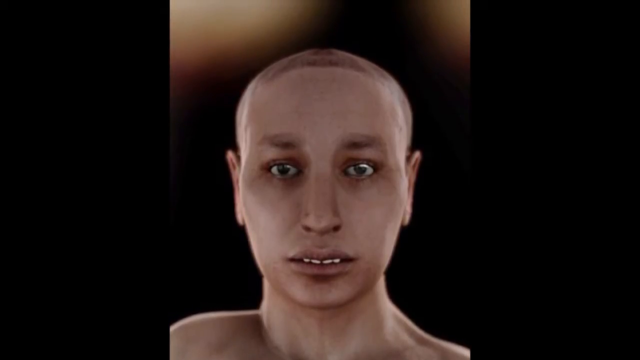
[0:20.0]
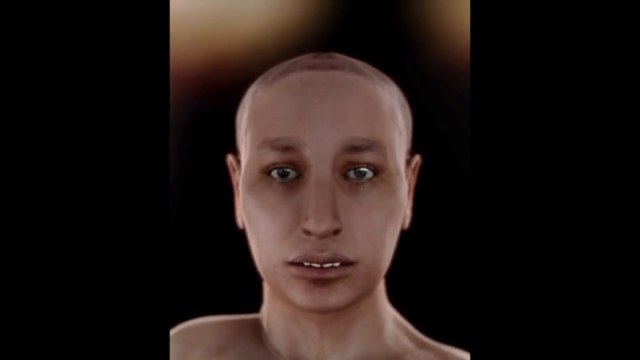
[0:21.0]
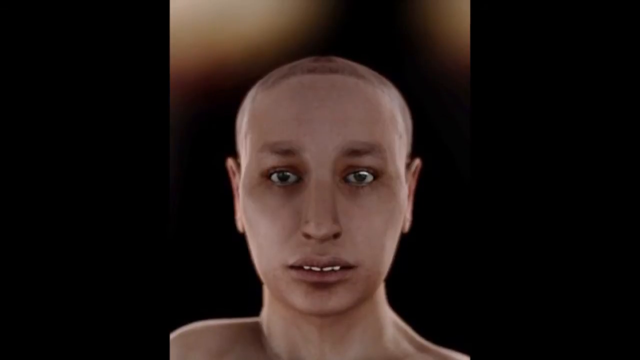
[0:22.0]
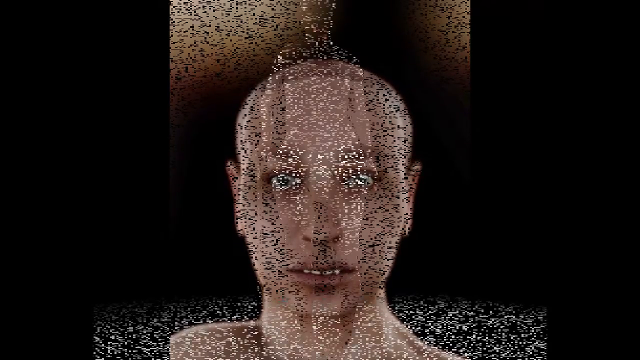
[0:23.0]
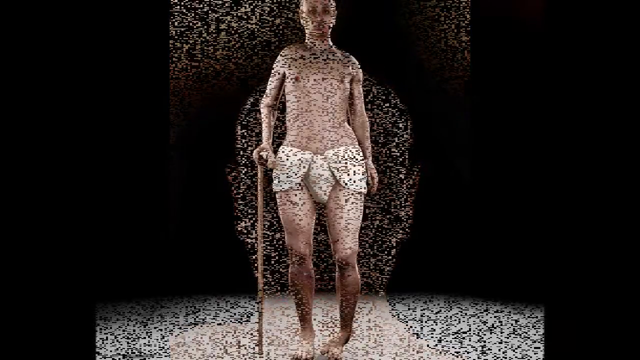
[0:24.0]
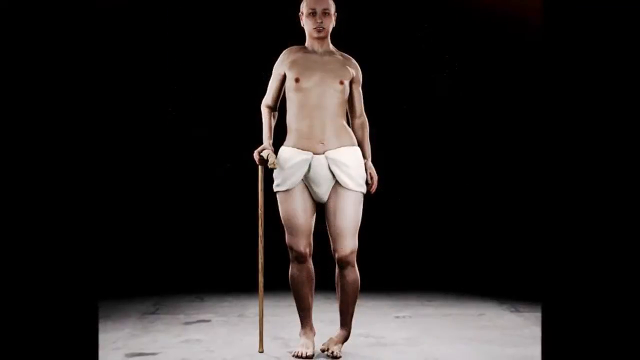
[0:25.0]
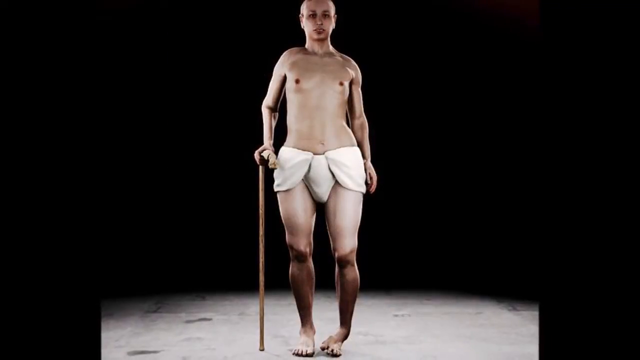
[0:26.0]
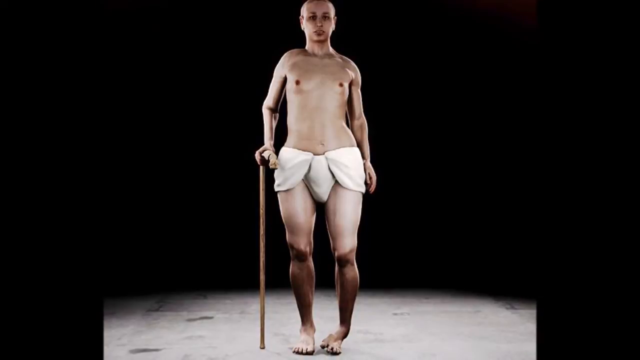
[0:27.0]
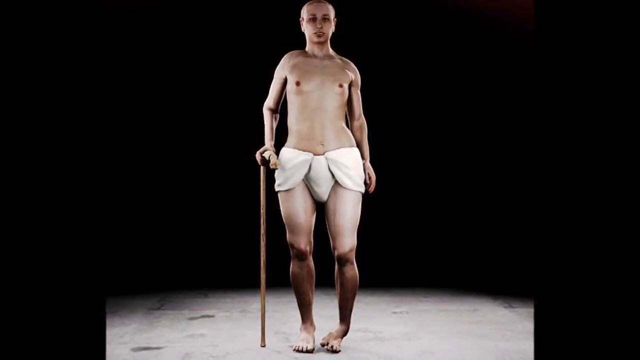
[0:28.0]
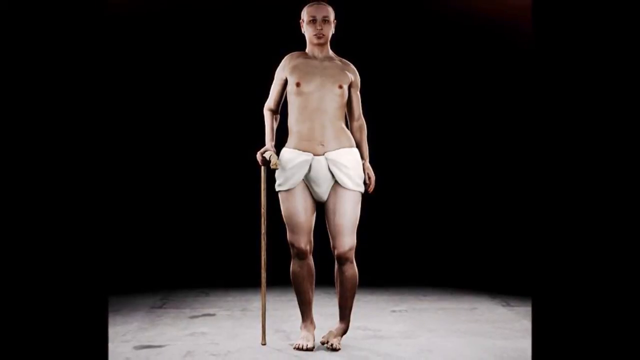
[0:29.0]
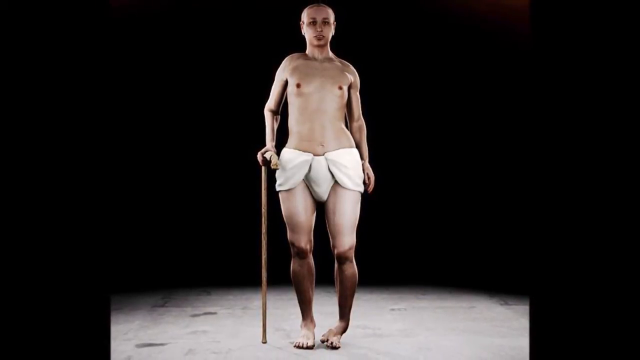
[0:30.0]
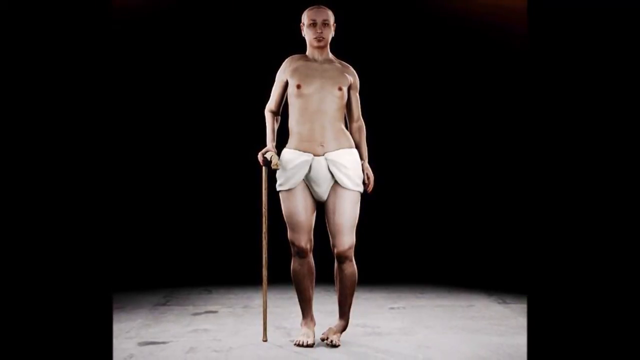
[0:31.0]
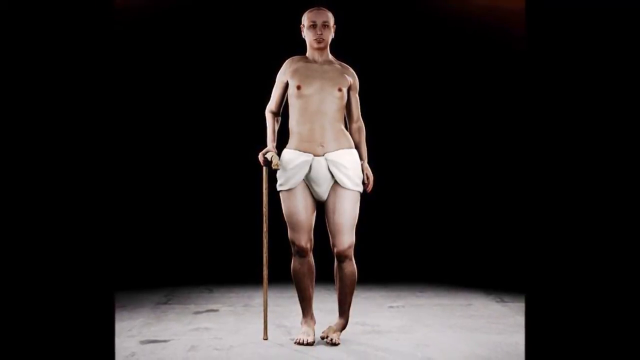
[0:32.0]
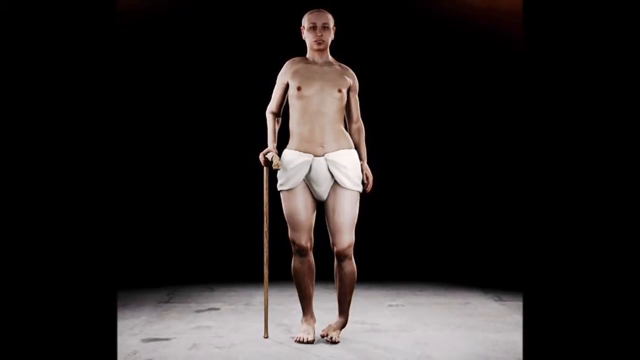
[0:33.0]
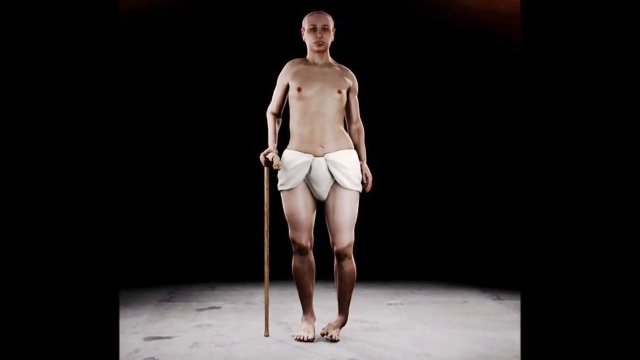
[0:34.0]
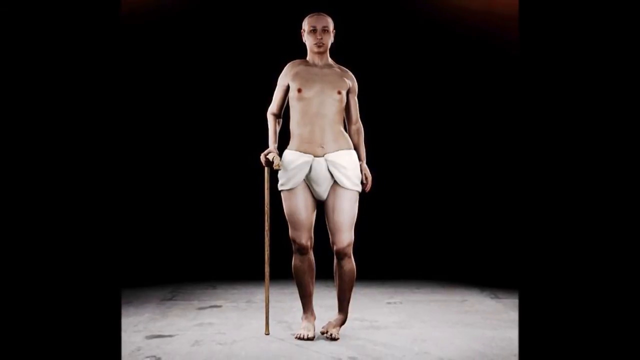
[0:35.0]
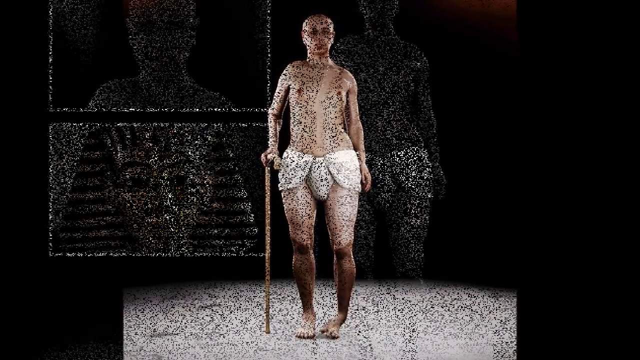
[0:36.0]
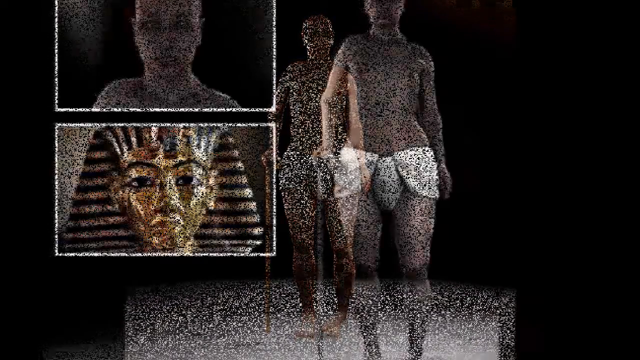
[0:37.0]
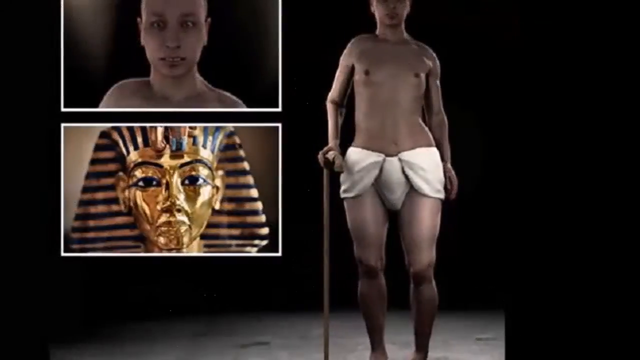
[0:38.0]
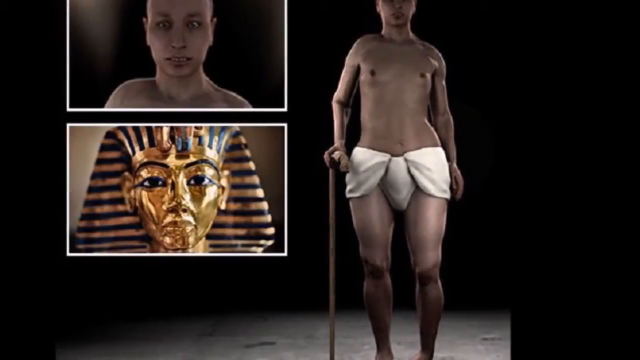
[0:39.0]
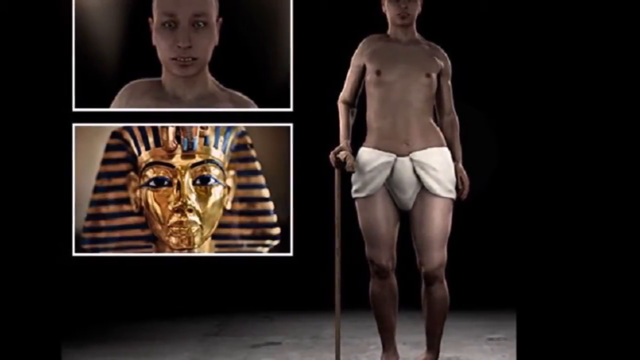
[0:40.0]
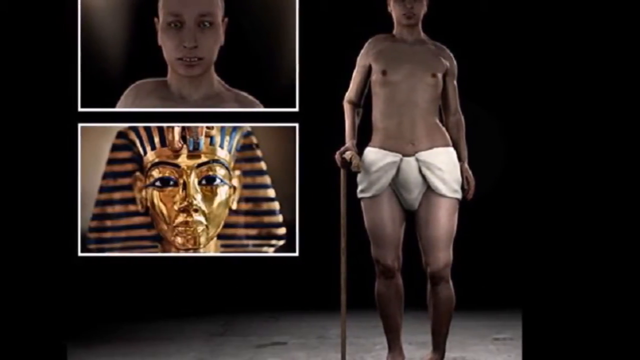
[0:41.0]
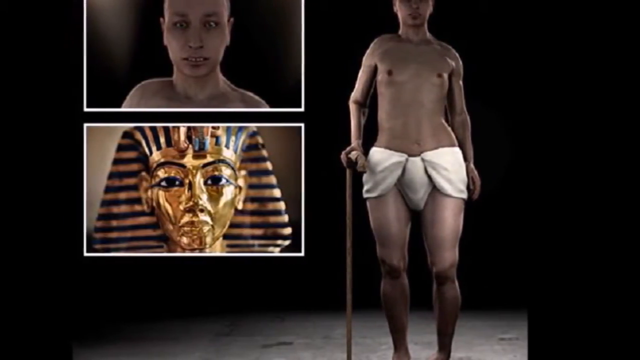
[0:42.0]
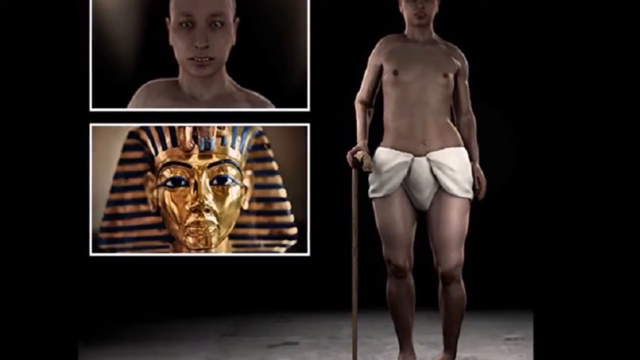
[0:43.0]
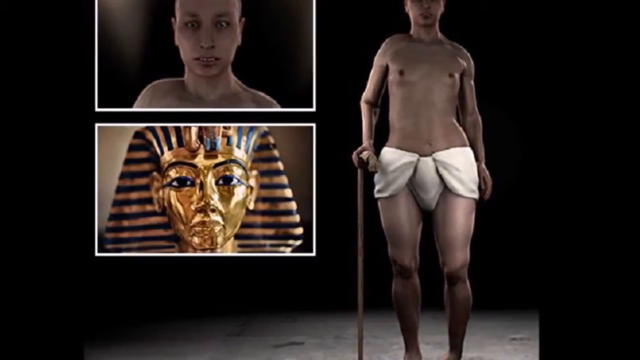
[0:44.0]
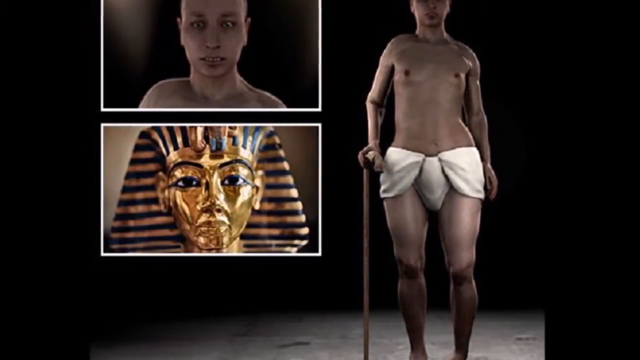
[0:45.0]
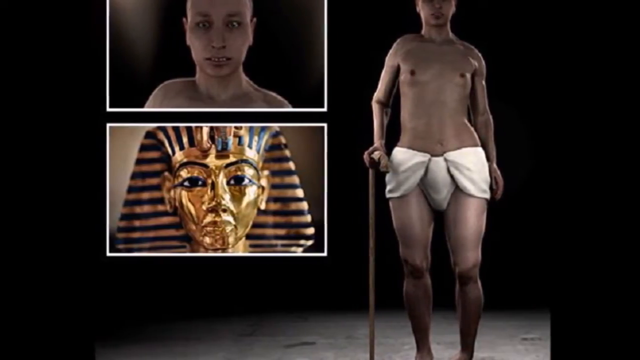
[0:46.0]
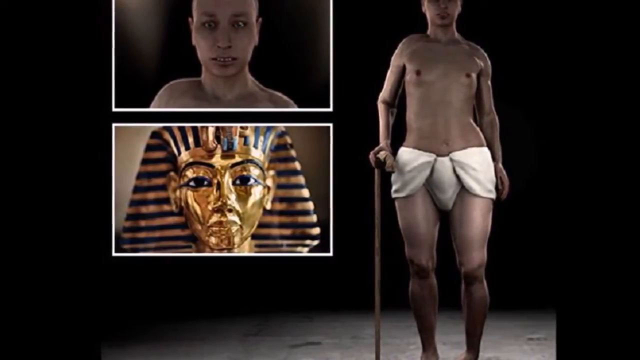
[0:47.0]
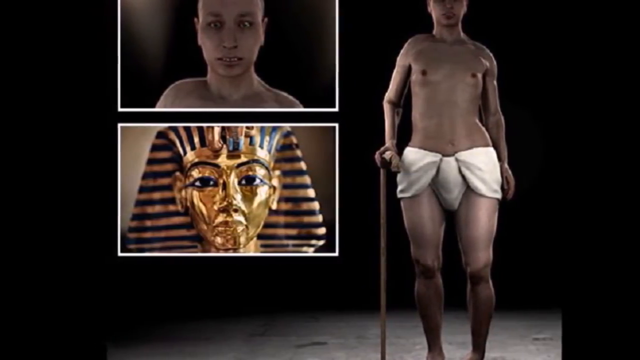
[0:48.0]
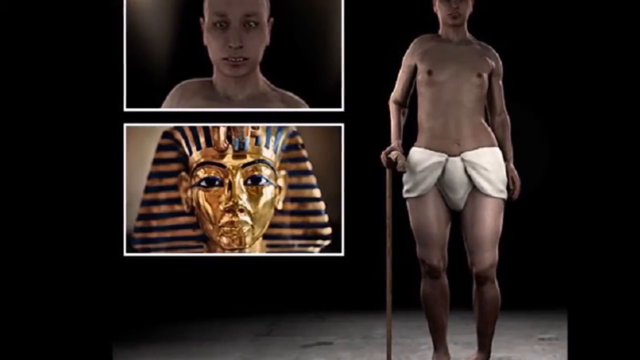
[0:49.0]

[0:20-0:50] An animation of a teenager's face looks at the viewer. He has no hair, so he looks almost bald, and his head is an oval shape. He has green eyes, ears and a nose, and his mouth is slightly open, showing his top four white teeth: the front two and the two next to them. His face is shown down to his shoulders, and he appears to wear no clothes, since there is nothing on his shoulders. The video slowly pans upward; the background is black with yellow and light white at the top left and right. The image turns grainy and transitions to a scene showing the same boy's full body. He faces the viewer and looks a little chubby at the bottom; his body narrows, gets a bit thicker toward the bottom, and narrows again. He has a cane in his right hand and appears to support himself on it, and his left foot looks twisted inwards. He is shirtless and seems to wear only a white loincloth around his body. His left arm is at his side, and his brown nipples, face and bald head are visible. He stands on a white floor against a black background, and the video zooms out. The video then transitions to a scene with two images at the top left, including King Tut's golden pharaoh head with the cobra on top and the blue and gold stripes, and the 3D animation of the boy standing with his cane on the right side. The video pans to the left, so the images slowly shift to the right.